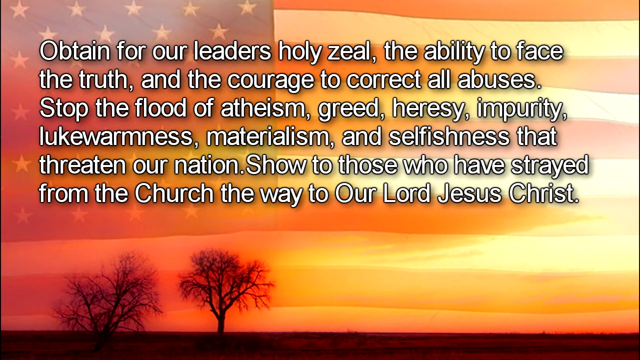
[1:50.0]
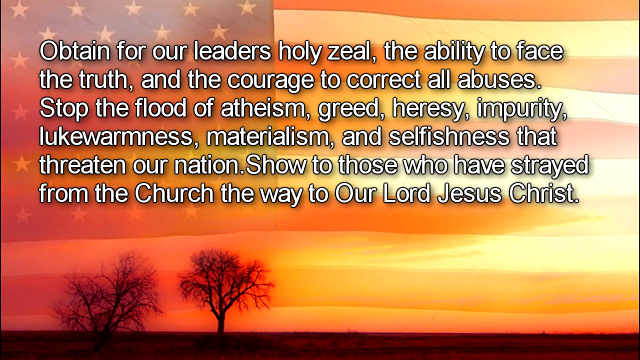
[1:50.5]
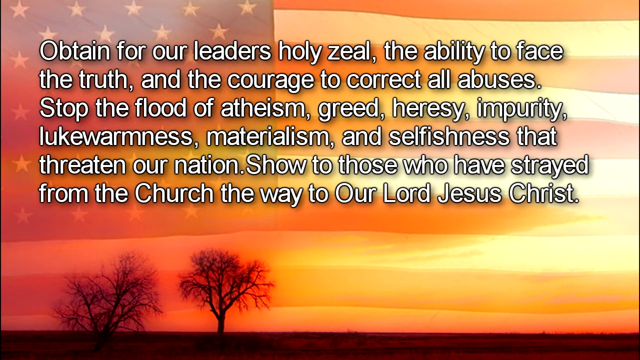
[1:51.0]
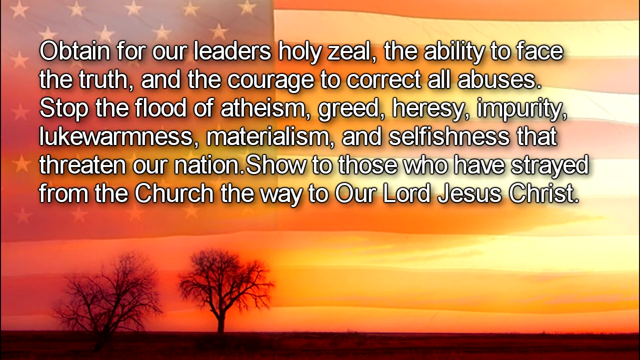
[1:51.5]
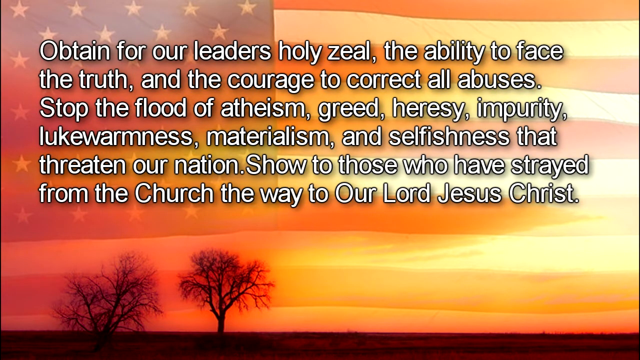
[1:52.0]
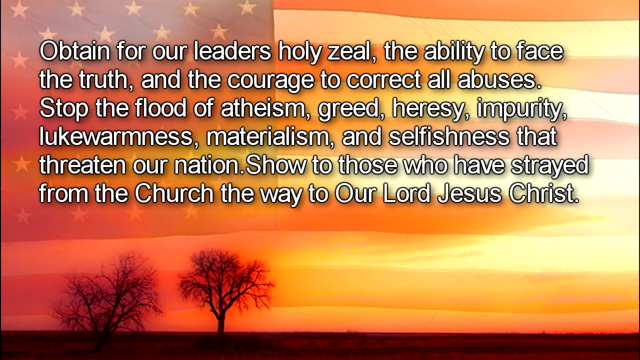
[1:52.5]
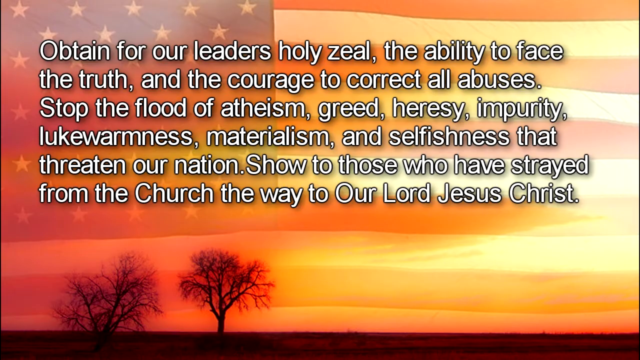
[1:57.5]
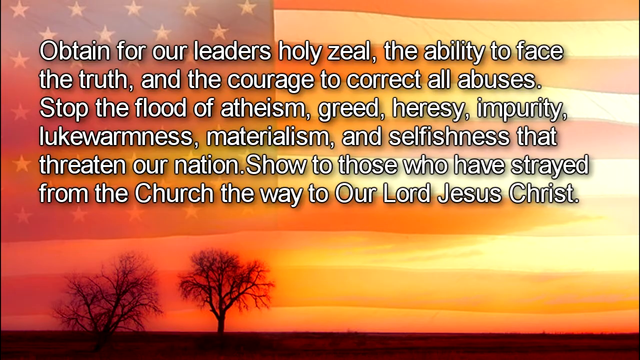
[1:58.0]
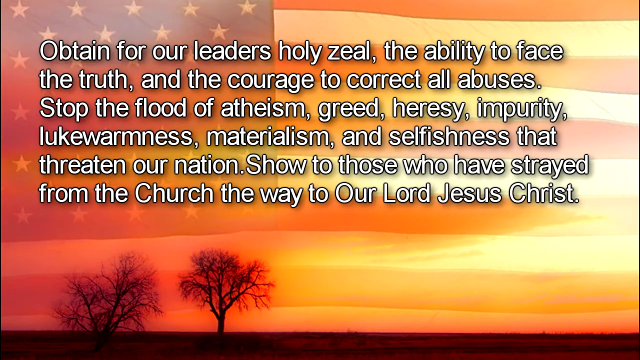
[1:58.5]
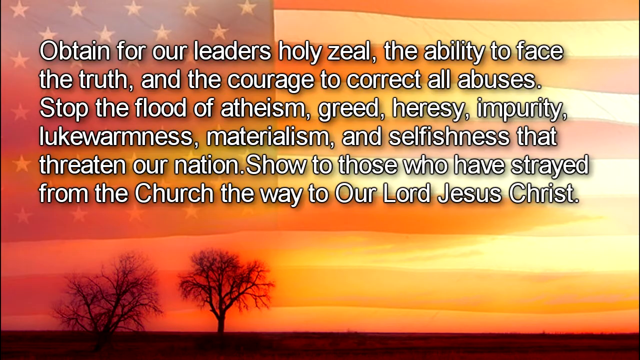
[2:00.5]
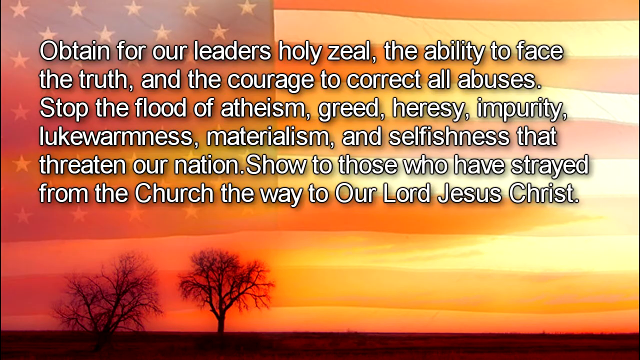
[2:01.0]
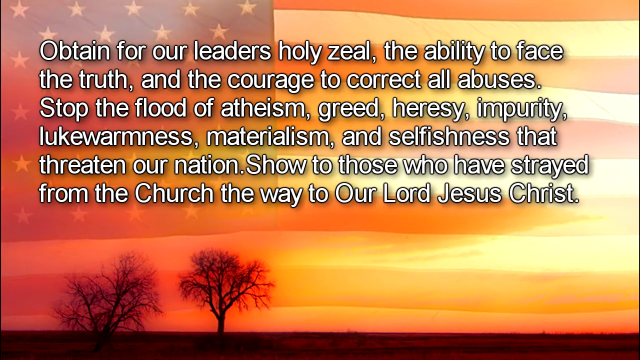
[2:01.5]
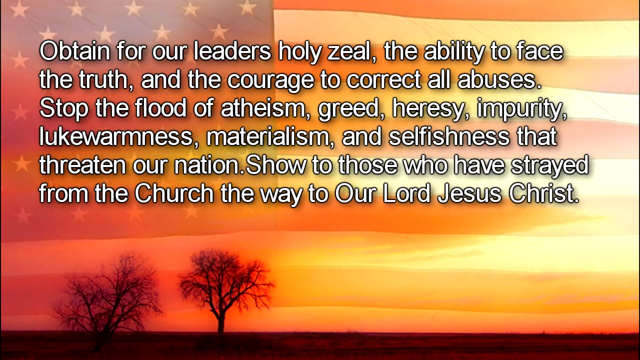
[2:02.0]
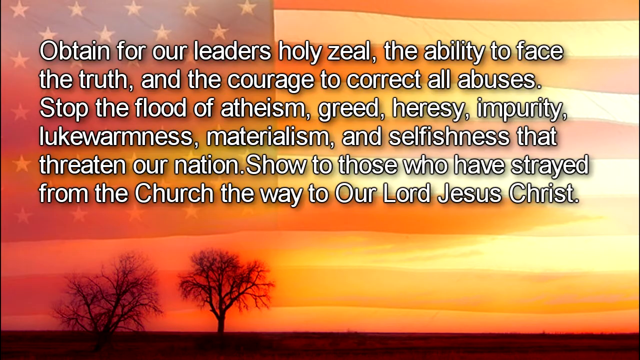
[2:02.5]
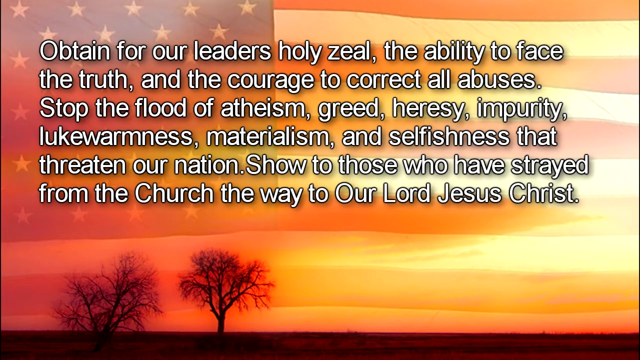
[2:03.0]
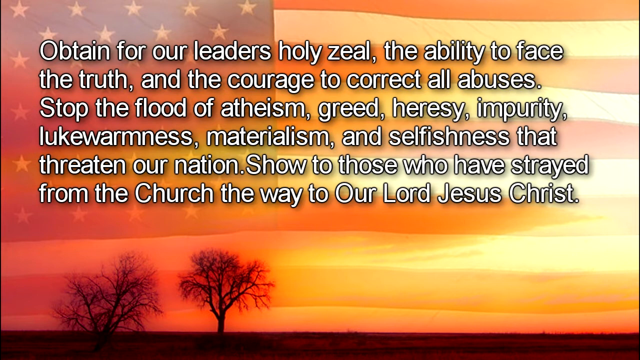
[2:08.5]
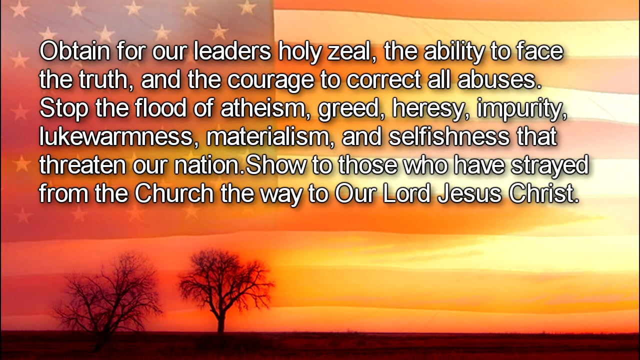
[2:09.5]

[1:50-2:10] A prayer is placed over an American flag that fills the whole background. White words lined in black are in the top half of the page and read "obtain for our leaders, holy zeal, the ability to face the truth and the courage to correct all abuses, stop the flood of atheism, greed, heresy, impurity, lukewarmness, materialism, and selfishness that threatens our nation. Show to those who have strayed from the church the way to our Lord Jesus Christ." Two winter trees that have lost their leaves are in the lower left-hand corner, with kind of a reddish glow. This part of the prayer has many capitalized words, such as "obtain," "church," "show" and "our Lord Jesus Christ."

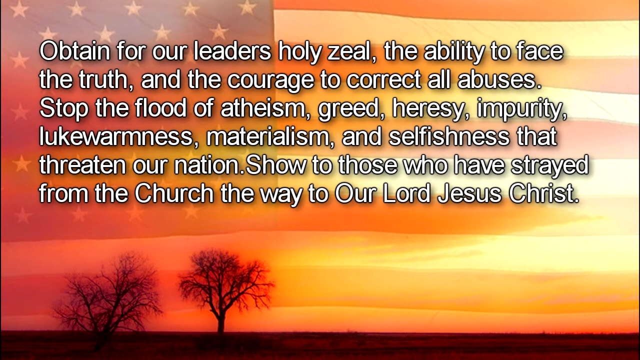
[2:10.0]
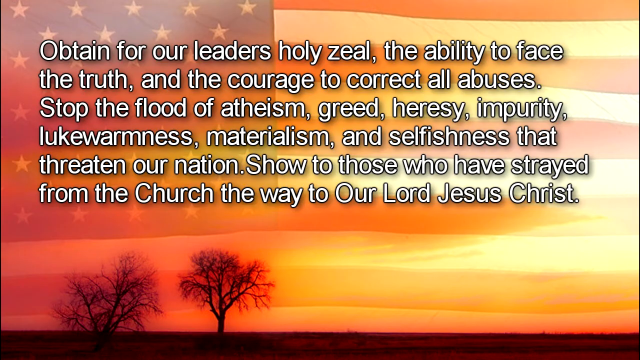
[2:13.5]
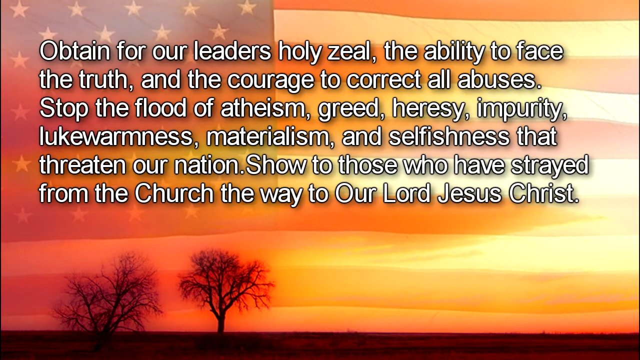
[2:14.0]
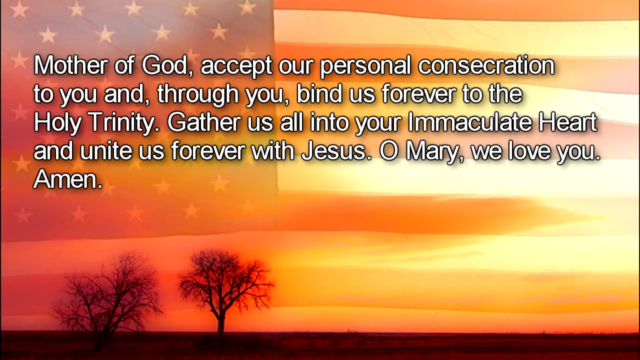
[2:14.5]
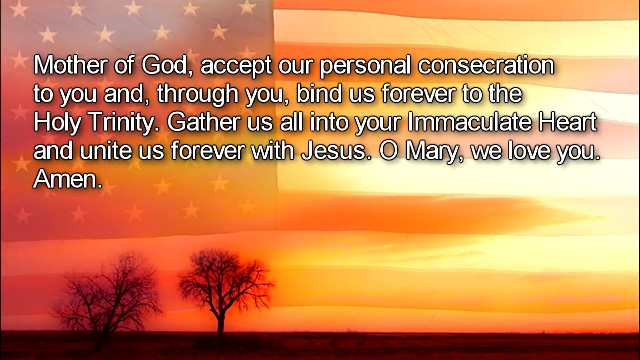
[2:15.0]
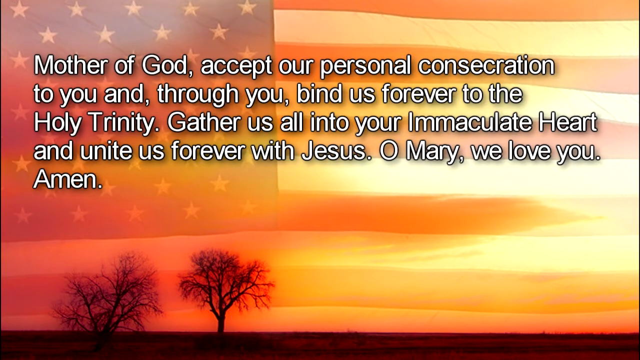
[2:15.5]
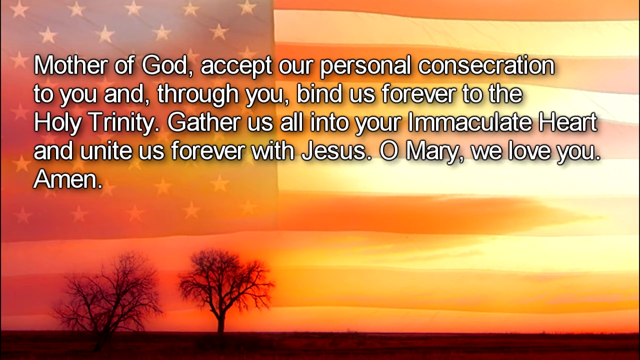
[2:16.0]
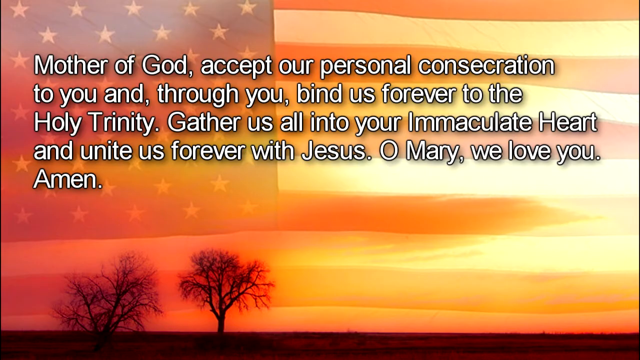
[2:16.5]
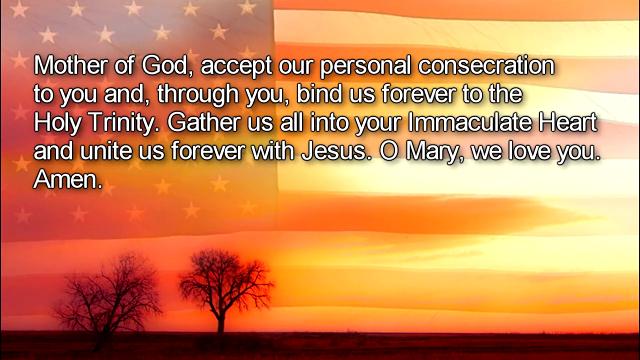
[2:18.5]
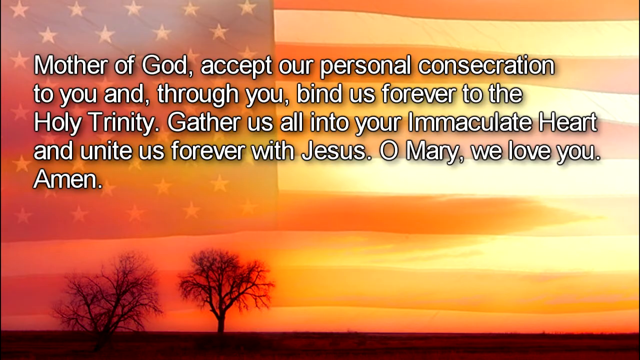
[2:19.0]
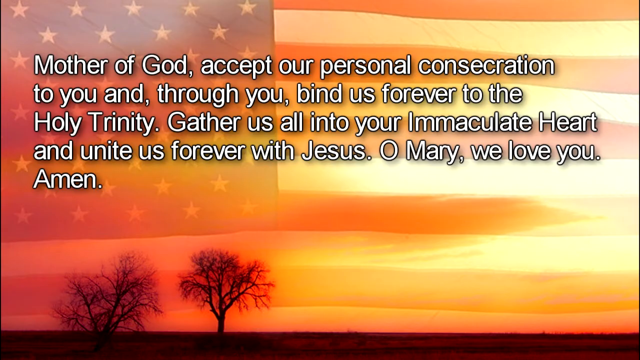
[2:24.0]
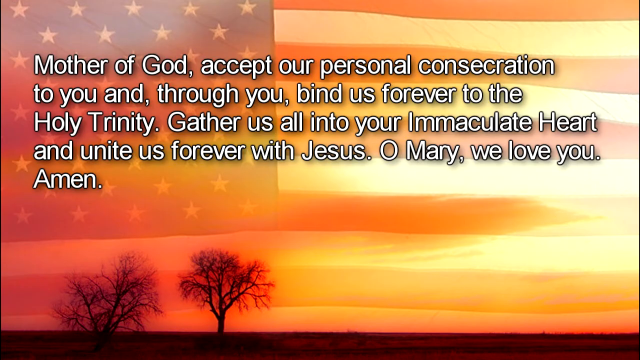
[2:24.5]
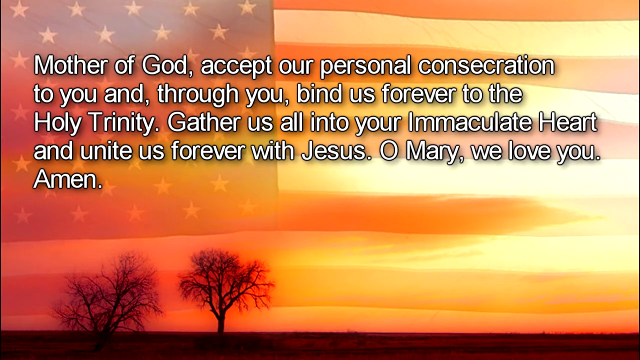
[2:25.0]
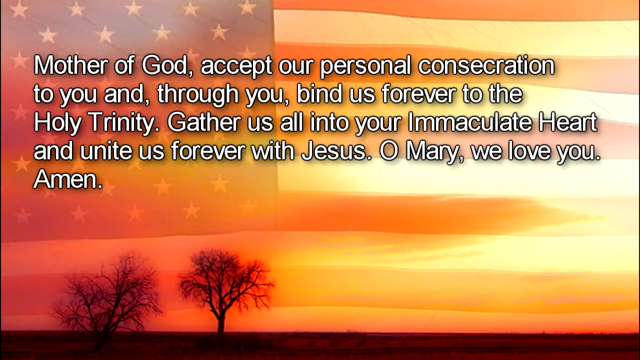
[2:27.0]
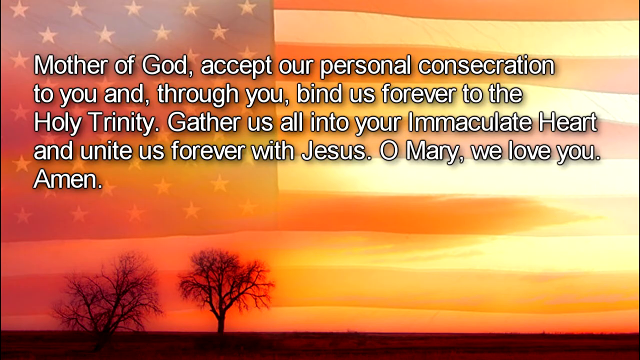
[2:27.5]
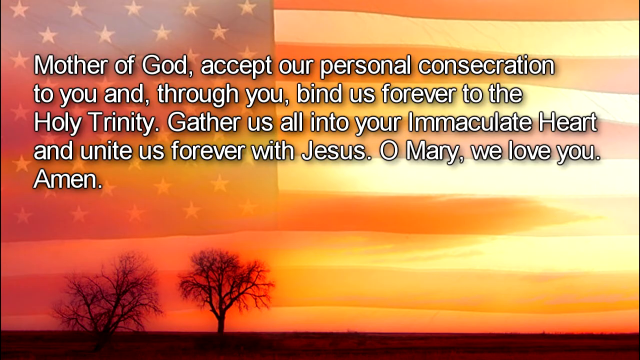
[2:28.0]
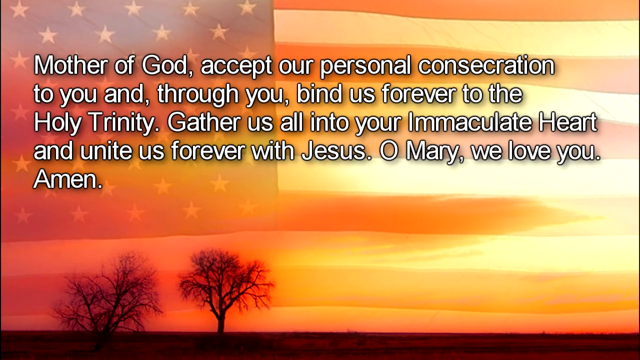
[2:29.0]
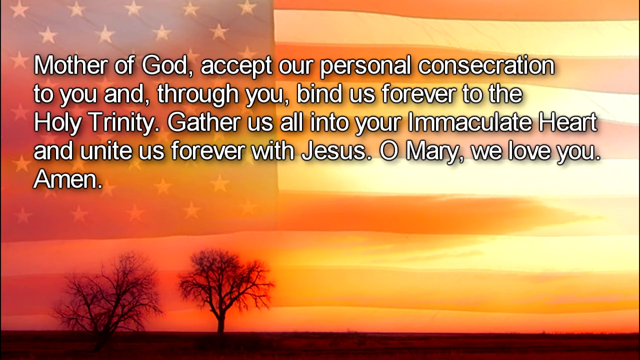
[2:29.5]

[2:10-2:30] An American flag covers the whole background. Two winter trees that have lost all their leaves are in the bottom left-hand corner with a reddish glow, possibly from a sunset. The top area has words in white font lined in black so they stand out, reading "obtain for our leaders, Holy zeal, the ability to face the truth and the courage to correct all abuses, stop the flood of atheism, greed, heresy, impurity, lukewarmness, materialism, and selfishness that threaten our nation. Show to those who have strayed from the church the way to our Lord Jesus Christ." The next part of the prayer then pops up: "mother of God, accept our personal consecration to you and through you bind us forever to the Holy Trinity, gather us all into your immaculate heart and unite us forever with Jesus. Oh, Mary, we love you, amen."